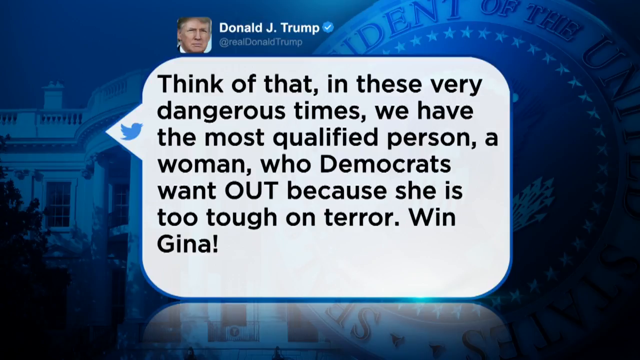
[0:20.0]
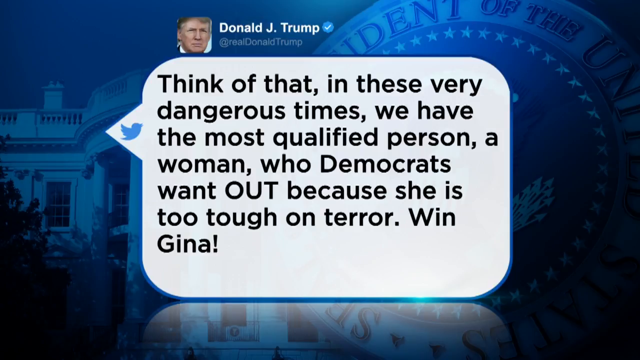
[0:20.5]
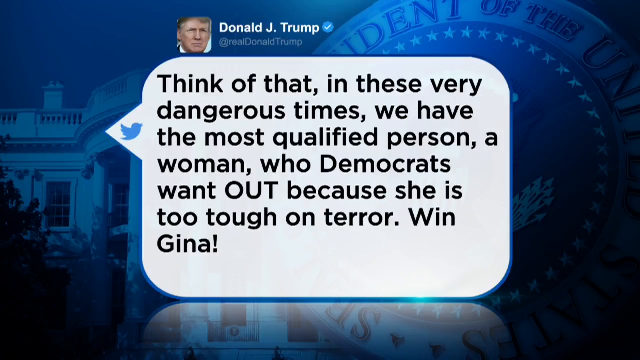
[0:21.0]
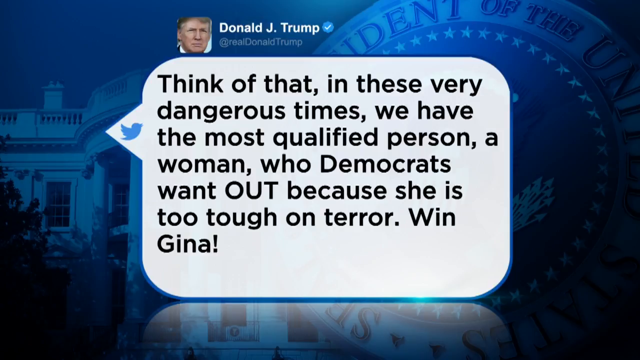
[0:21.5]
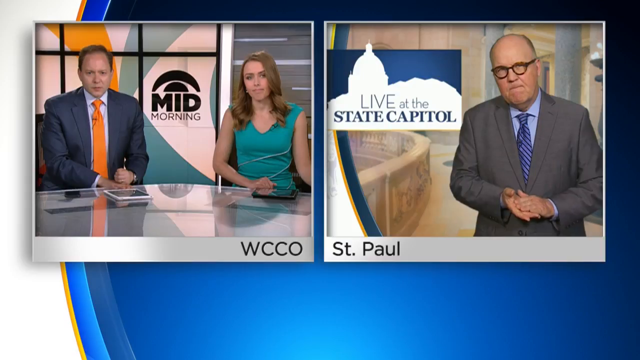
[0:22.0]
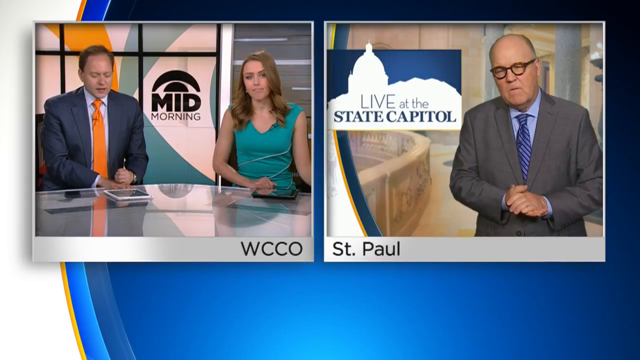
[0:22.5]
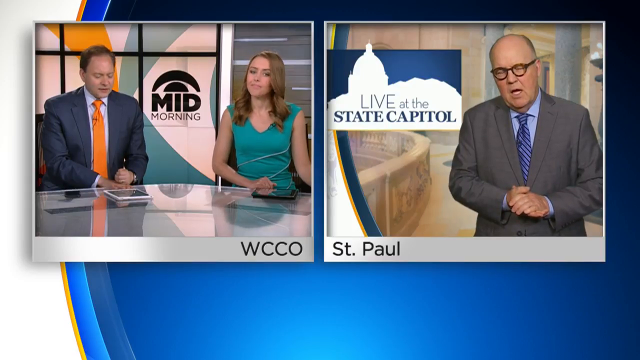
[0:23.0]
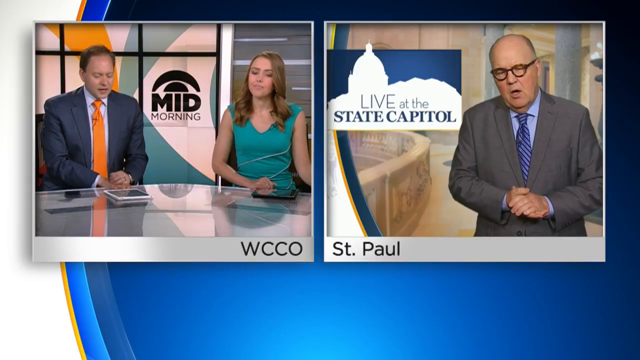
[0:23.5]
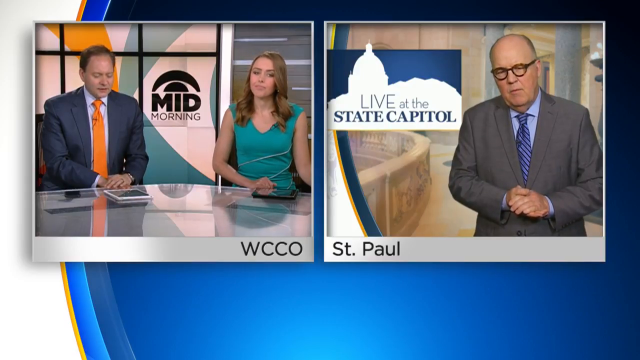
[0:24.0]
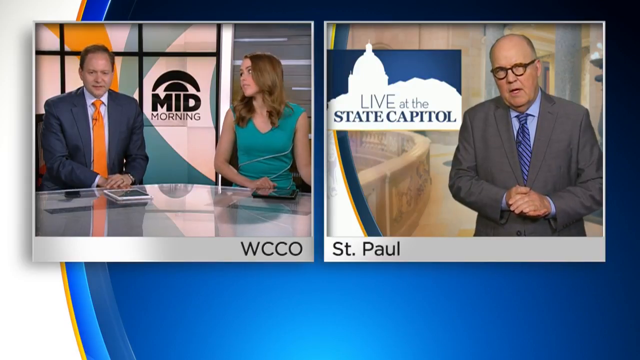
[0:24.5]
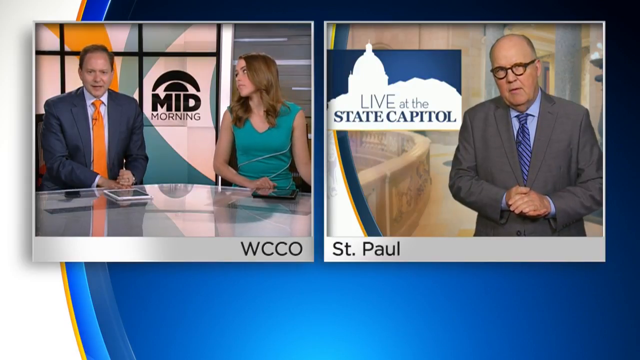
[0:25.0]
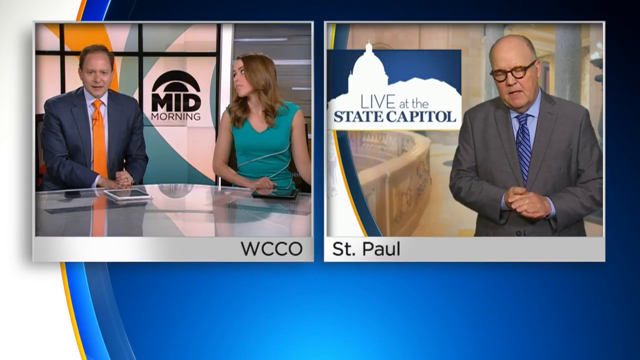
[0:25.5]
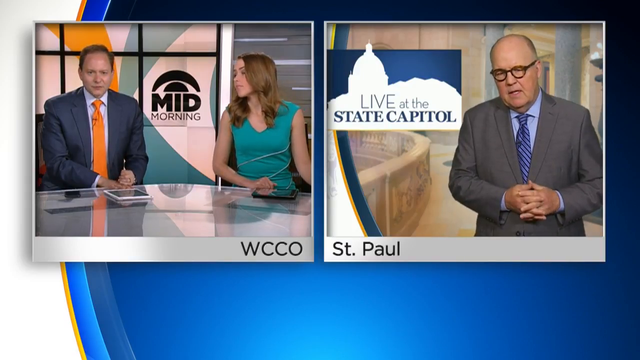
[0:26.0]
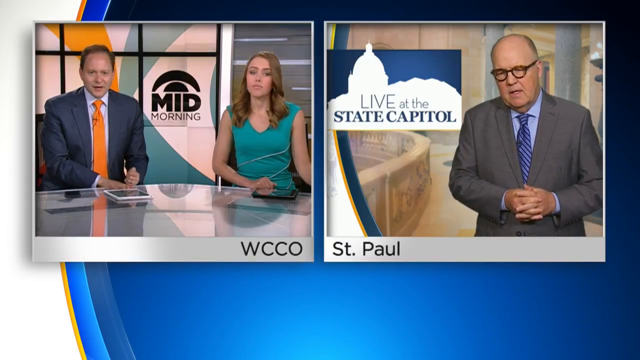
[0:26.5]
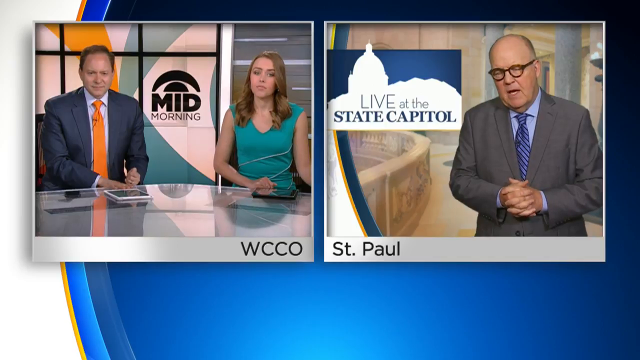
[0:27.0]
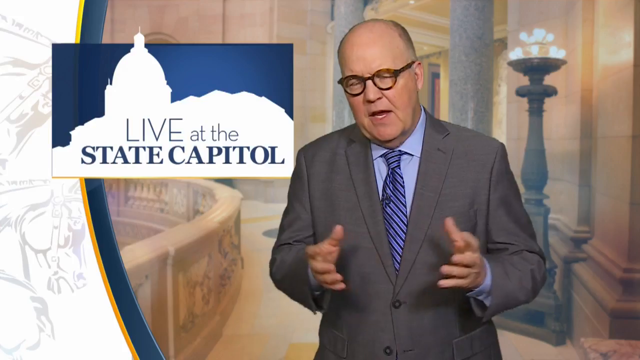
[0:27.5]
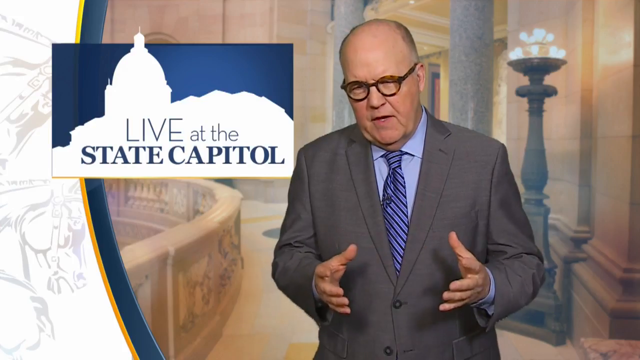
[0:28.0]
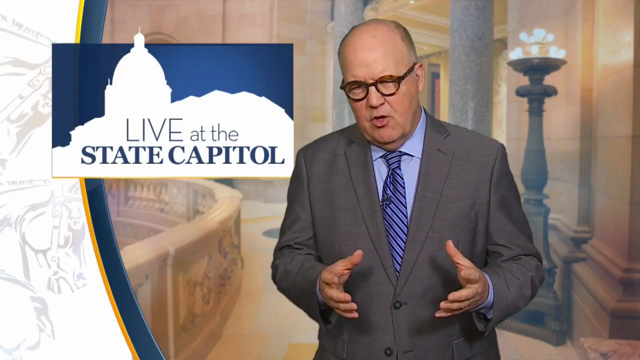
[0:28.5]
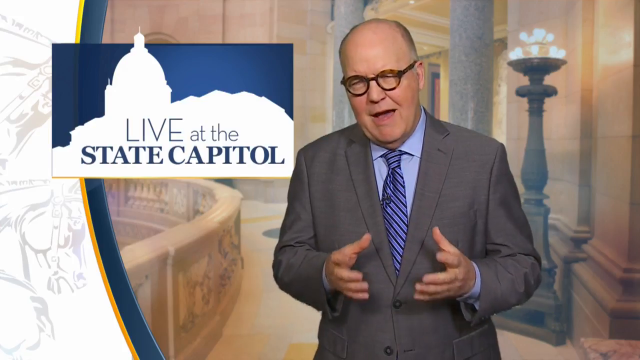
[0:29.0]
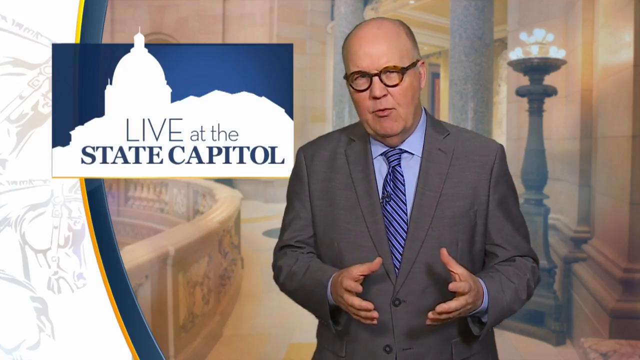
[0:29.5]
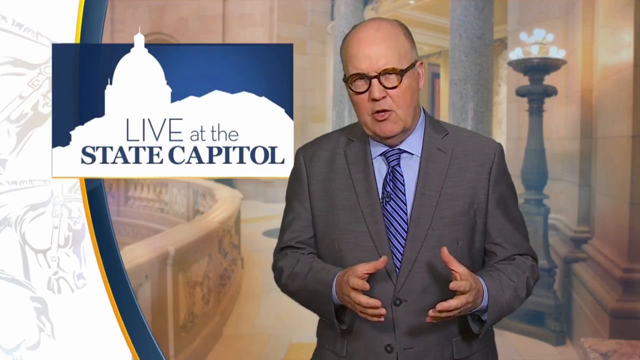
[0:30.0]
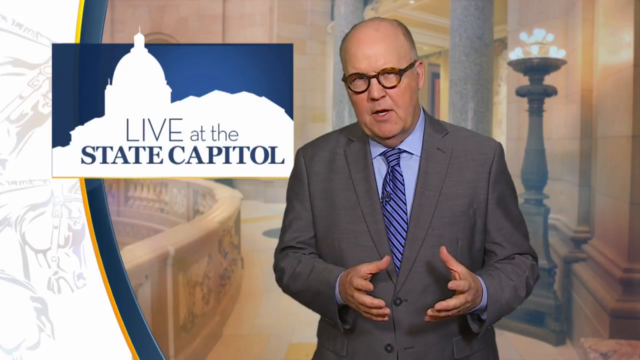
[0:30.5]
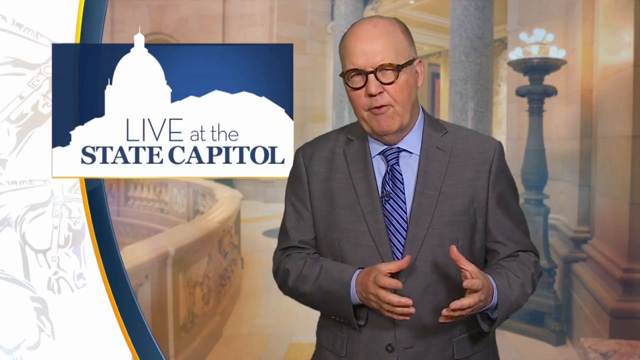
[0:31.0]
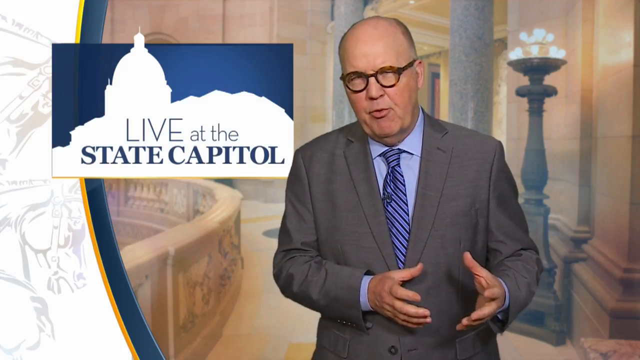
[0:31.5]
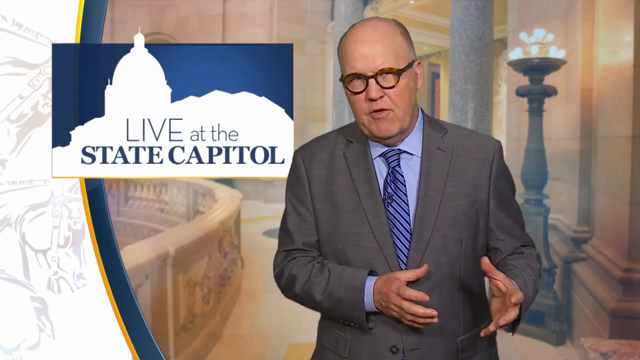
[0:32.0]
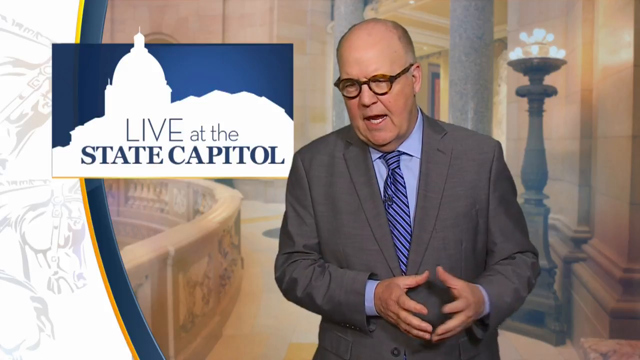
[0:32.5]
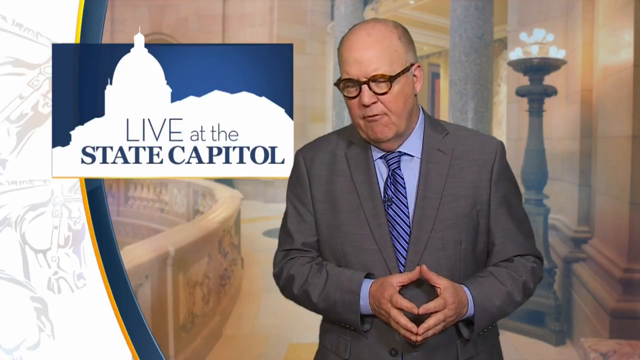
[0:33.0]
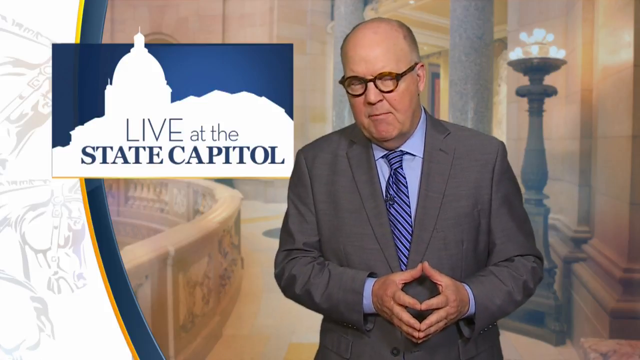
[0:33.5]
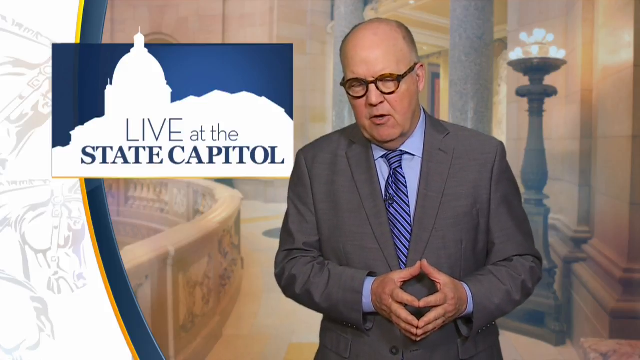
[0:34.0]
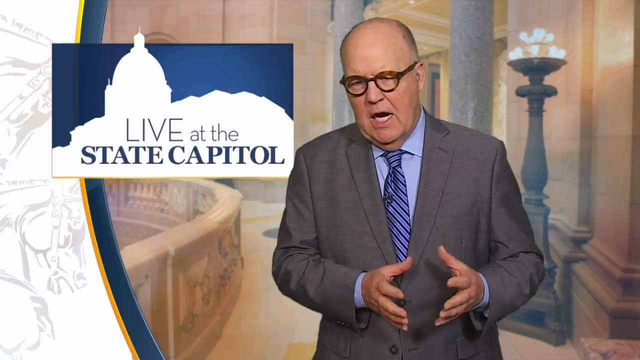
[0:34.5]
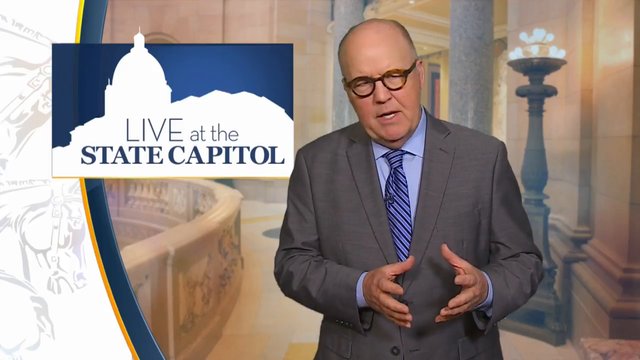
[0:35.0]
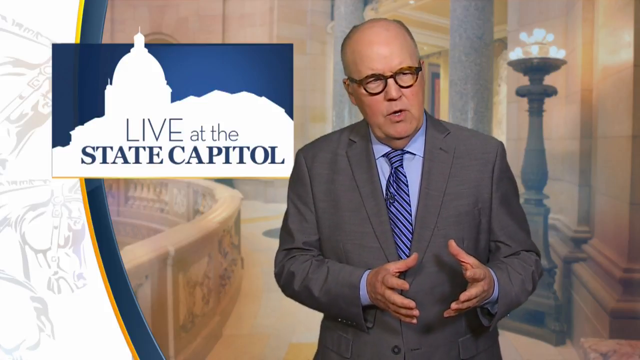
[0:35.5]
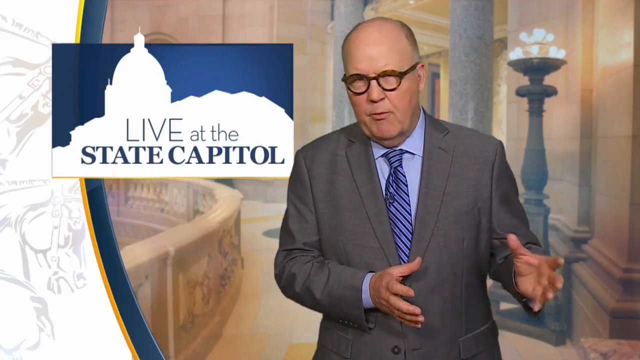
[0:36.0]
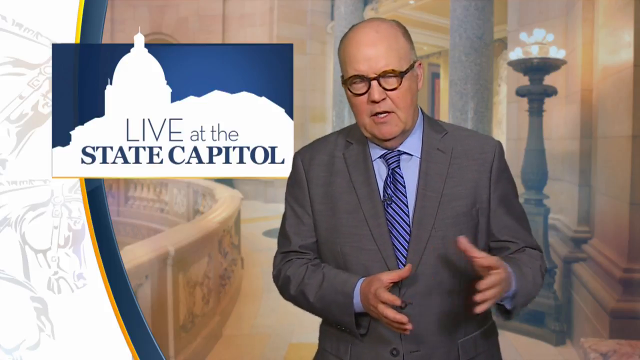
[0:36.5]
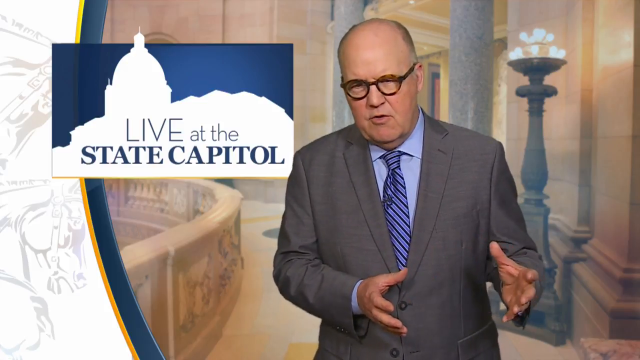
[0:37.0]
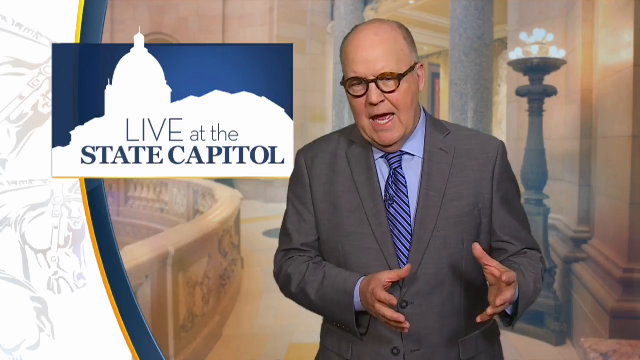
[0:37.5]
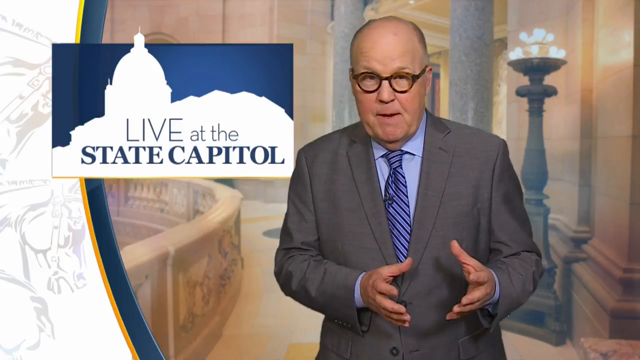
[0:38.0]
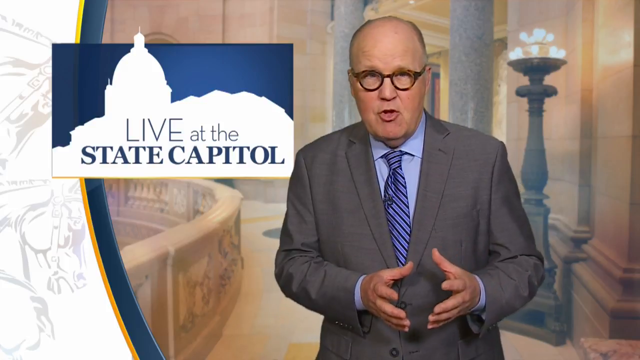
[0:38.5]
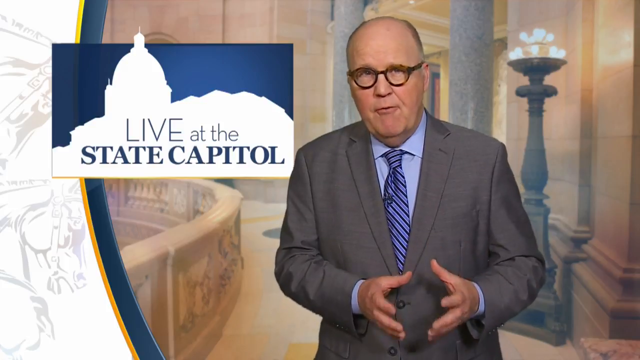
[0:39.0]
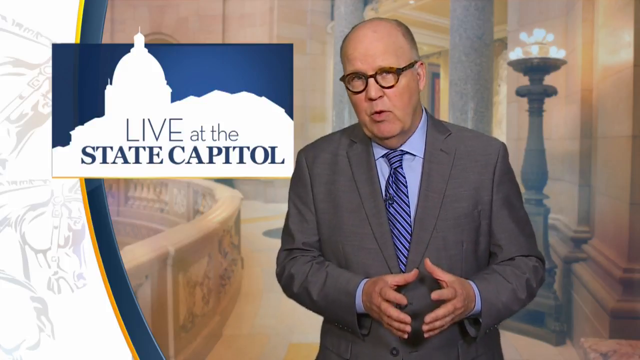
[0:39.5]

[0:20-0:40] In the WCCO studio for the mid-morning broadcast, Jason wears a blue-gray suit with an orange tie and a light blue tie. The woman wears a seafoam dress, somewhat low-cut but not revealing. The man at the State Capitol wears a darker-gray suit with a blue undershirt and a blue tie. The shot then shows only the man live at the Capitol, motioning with his hands. Behind him is a picture of the inside of the Capitol, with what looks like a column with candles on it. The view then returns to the President's tweet.